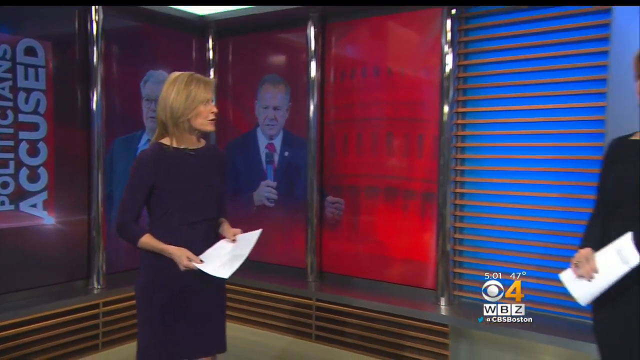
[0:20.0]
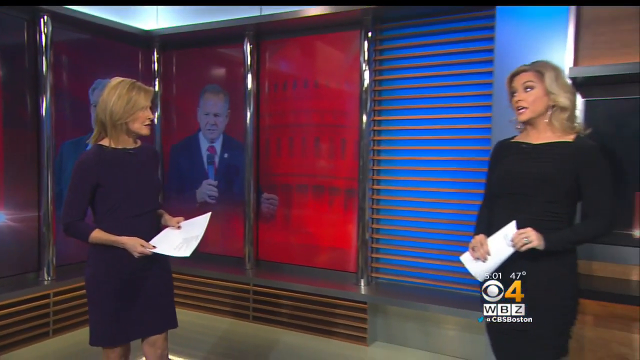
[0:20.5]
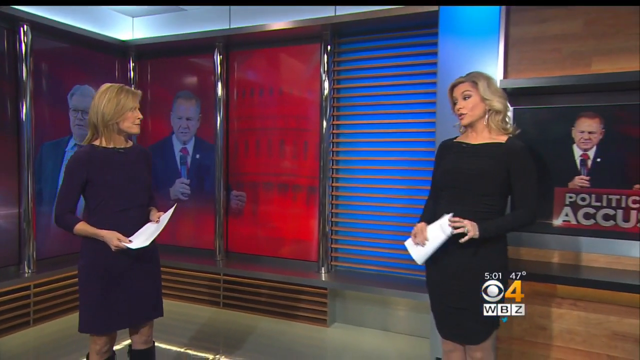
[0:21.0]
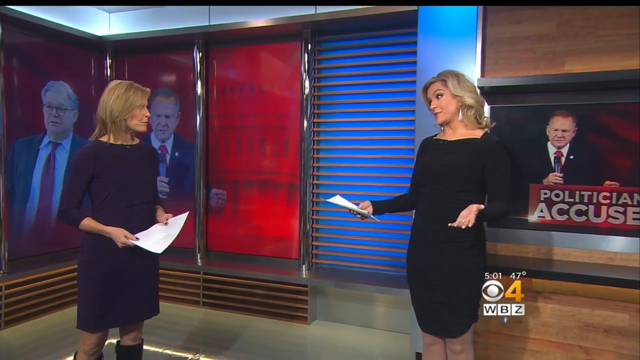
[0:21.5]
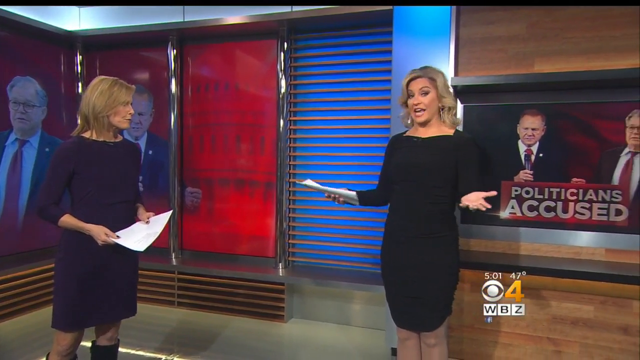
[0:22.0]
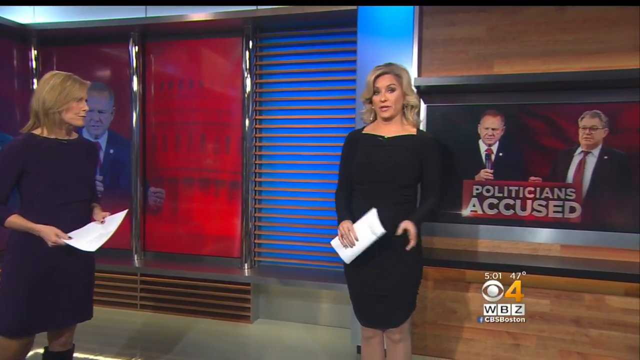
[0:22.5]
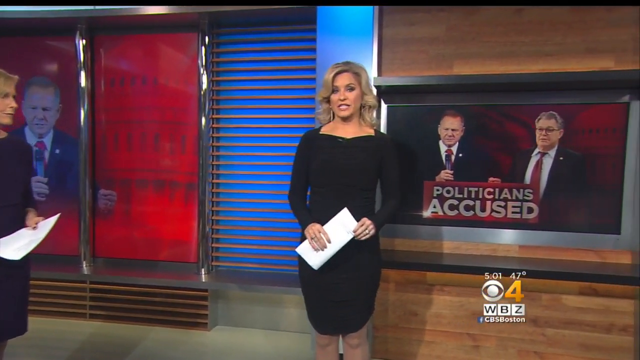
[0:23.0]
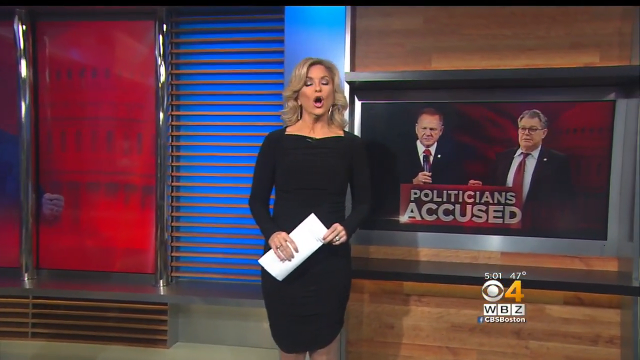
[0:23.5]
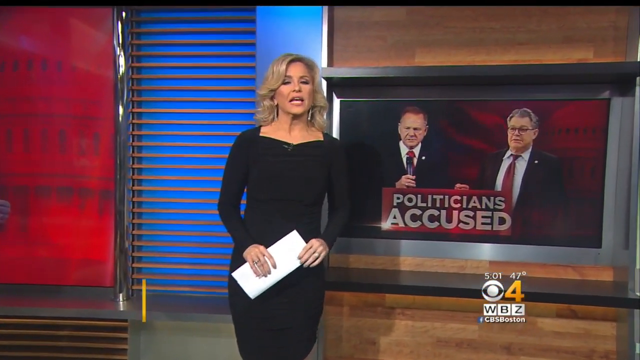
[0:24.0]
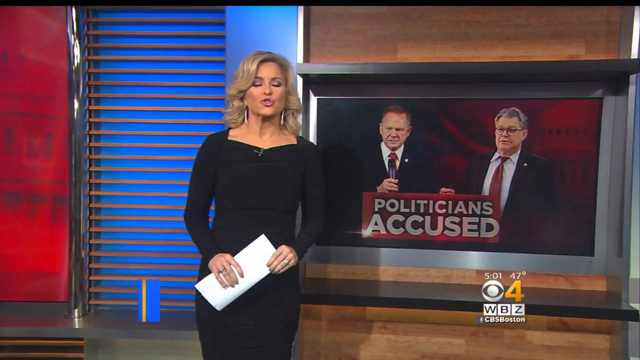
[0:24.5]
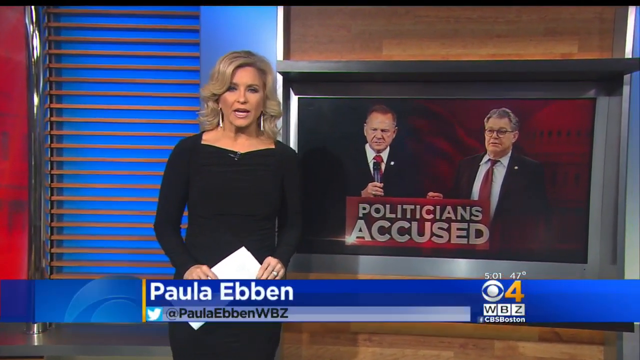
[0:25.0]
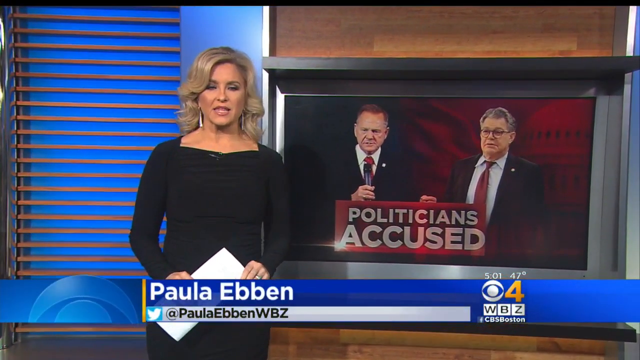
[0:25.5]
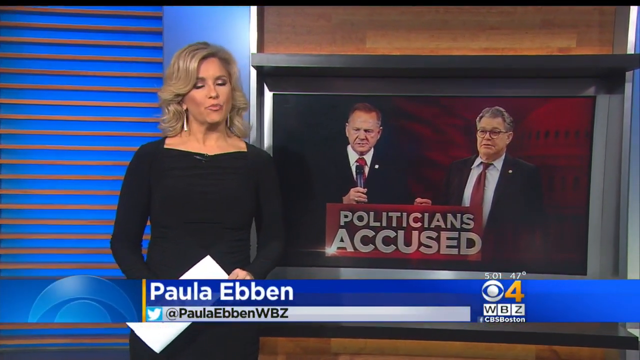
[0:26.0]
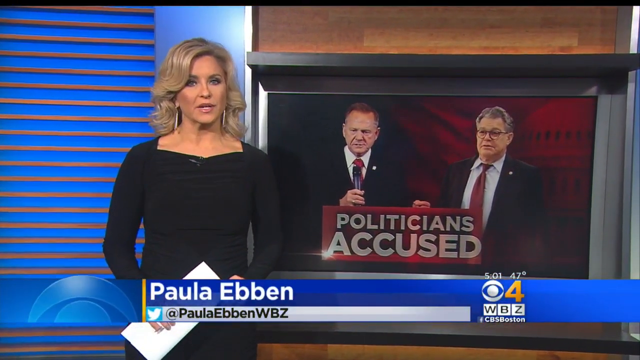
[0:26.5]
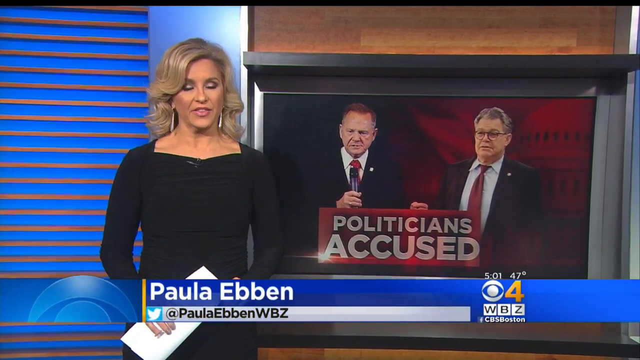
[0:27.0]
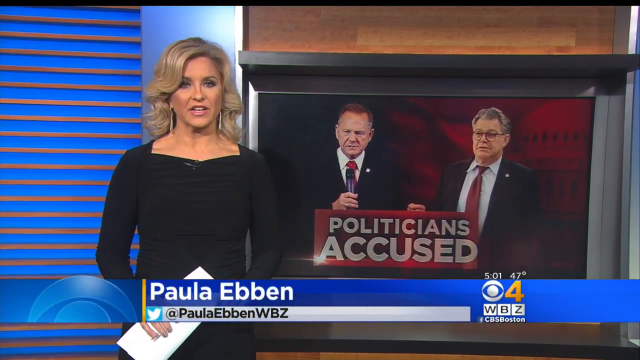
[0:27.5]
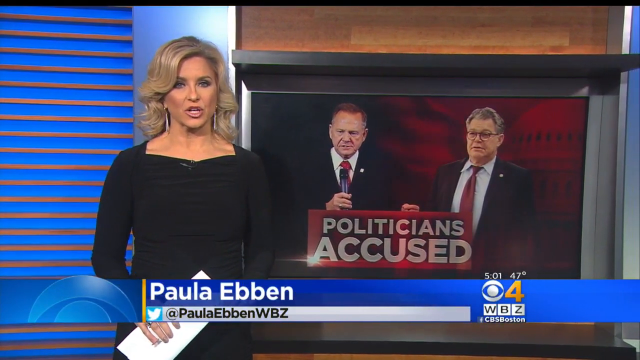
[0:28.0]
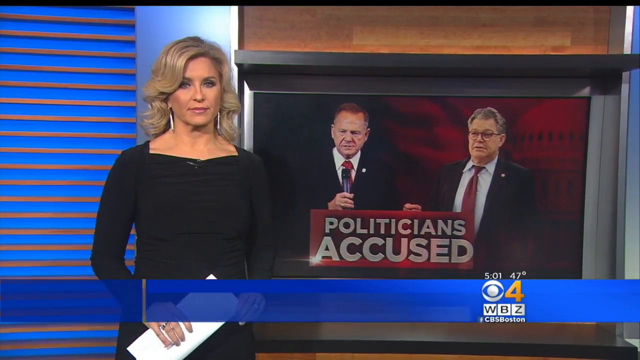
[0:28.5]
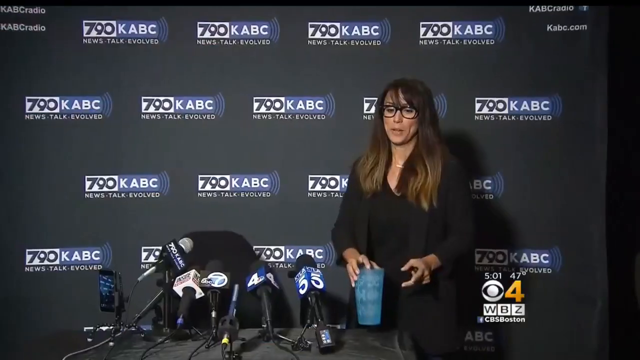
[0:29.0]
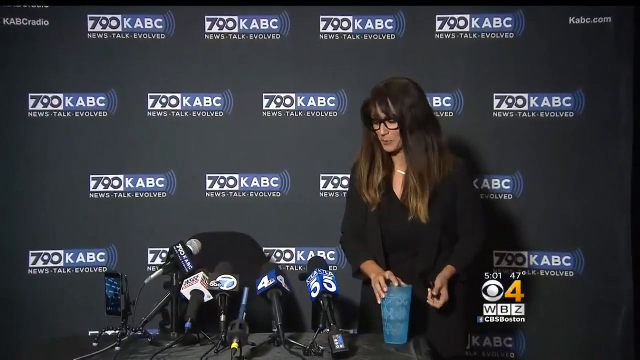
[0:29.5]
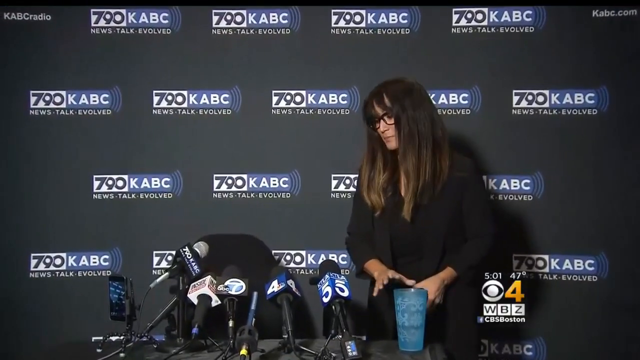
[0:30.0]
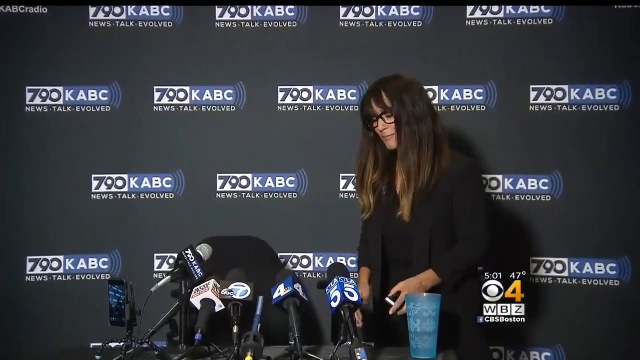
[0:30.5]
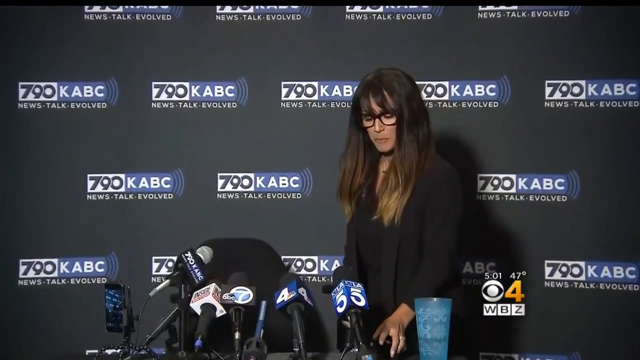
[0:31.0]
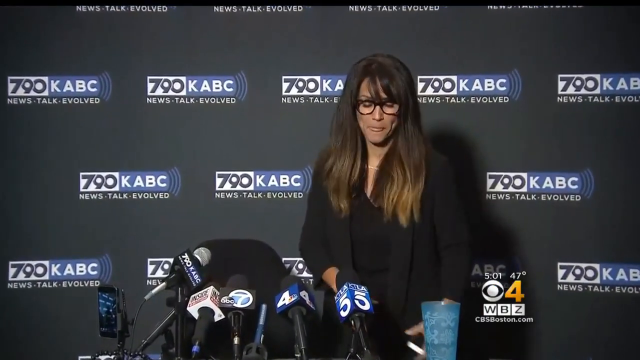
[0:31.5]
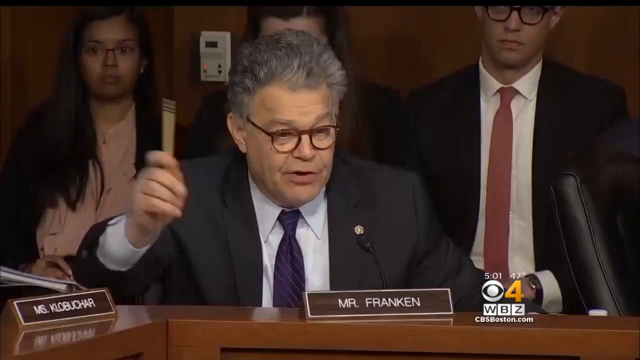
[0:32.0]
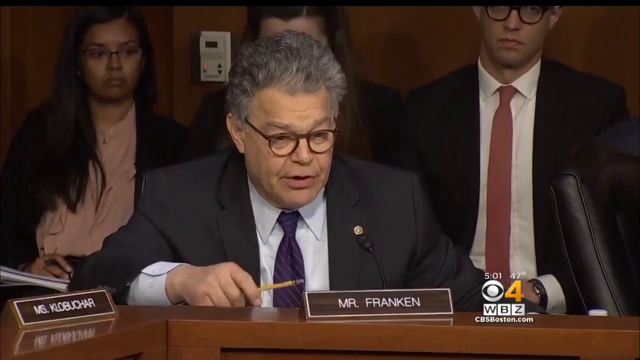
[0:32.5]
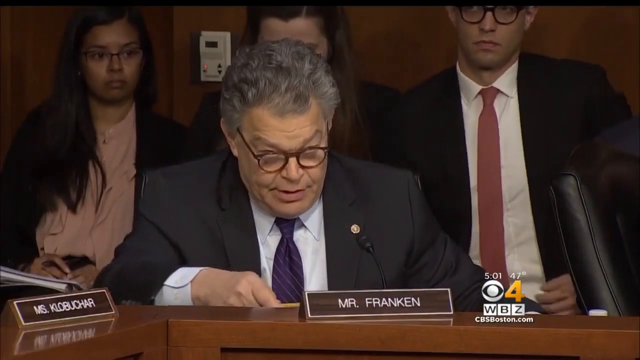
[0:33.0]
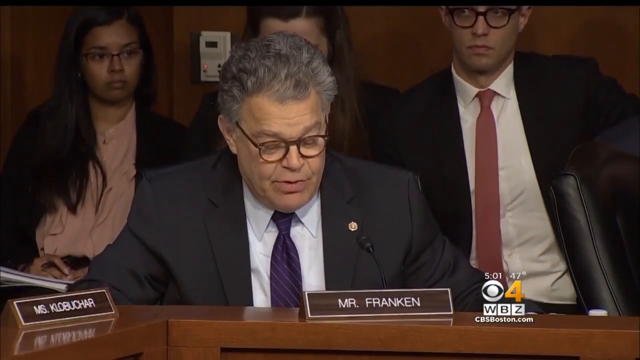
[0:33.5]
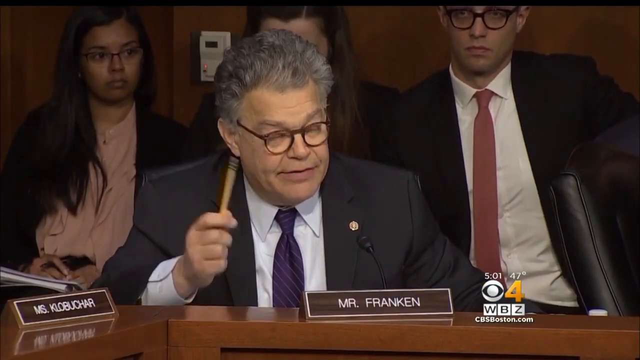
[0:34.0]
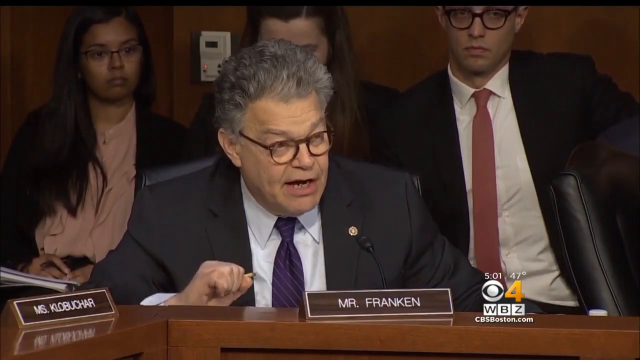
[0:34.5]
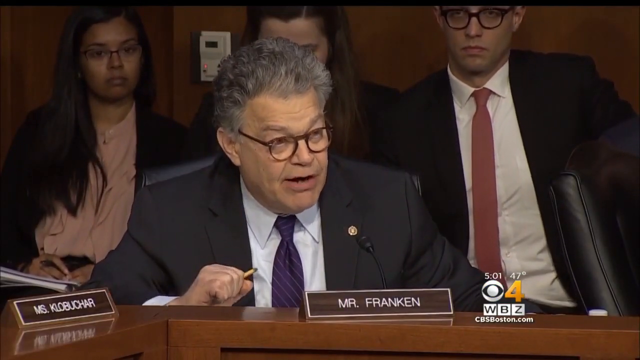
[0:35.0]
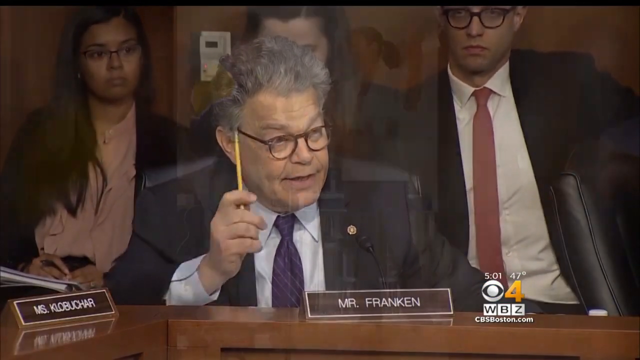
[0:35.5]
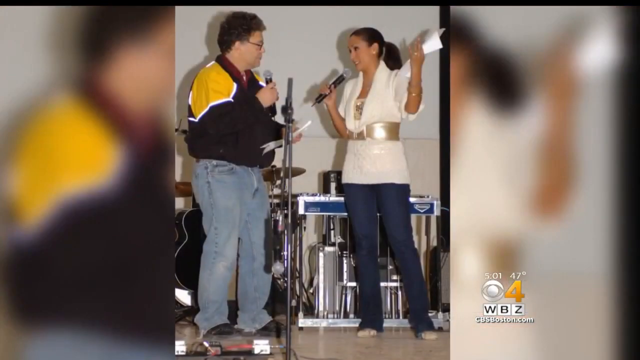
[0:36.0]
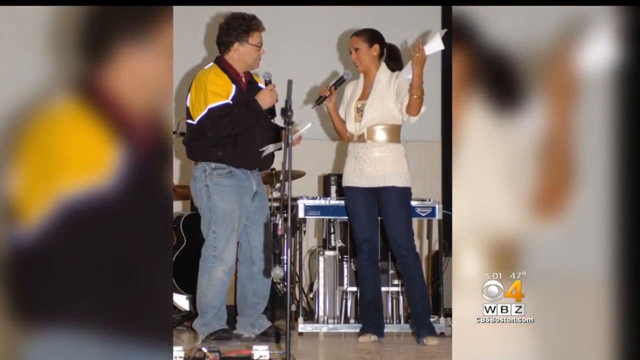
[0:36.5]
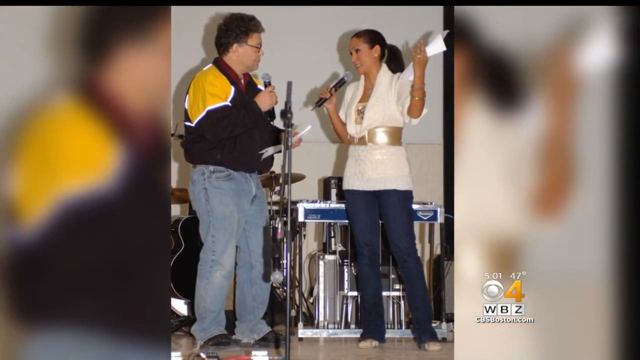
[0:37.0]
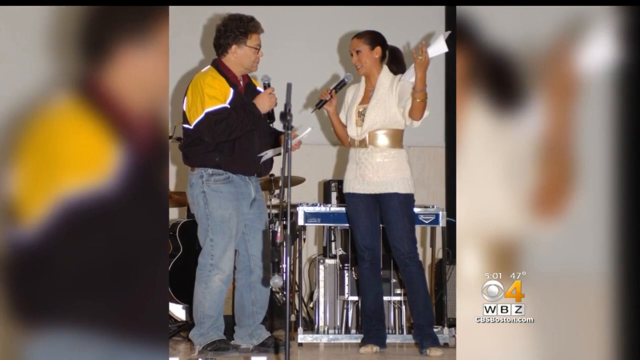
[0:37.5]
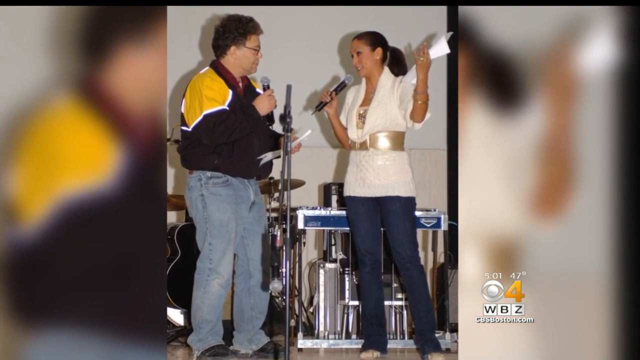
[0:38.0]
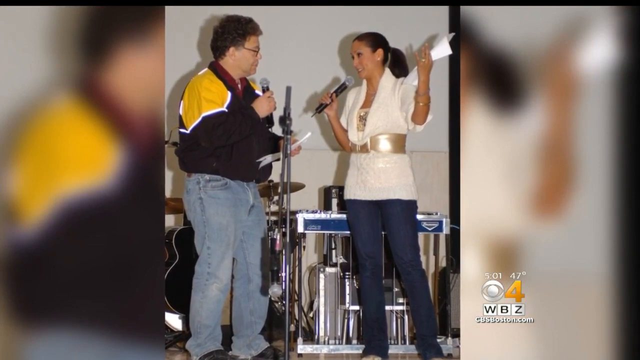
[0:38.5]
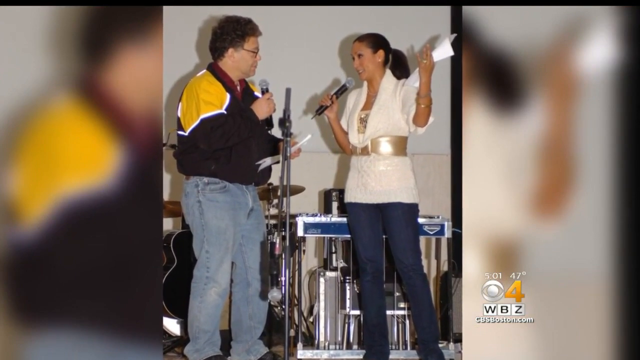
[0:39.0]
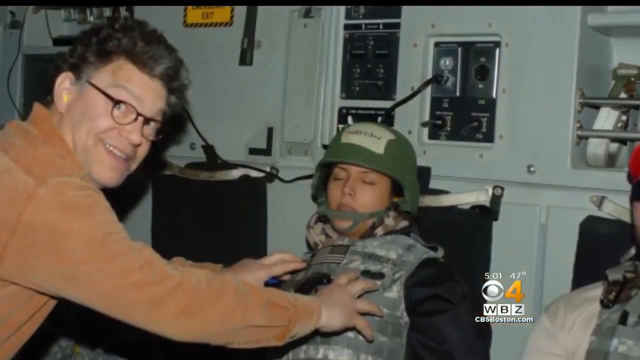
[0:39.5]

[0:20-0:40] The blonde woman in the purple dress continues speaking, with Al Franken and Roy Moore on a red background behind her. The camera moves to the right and a younger TV reporter appears, and the shot zooms in on her alone. She is white with blonde hair and wears a black dress; a blue banner gives her name as Paula Ebben. Behind her is a screen with pictures of the two politicians and "politicians accused". The video cuts to a press conference on 790 KABC, showing a white woman in a black outfit close to a seat with microphones. It then cuts to a video of Al Franken in a suit speaking towards the microphone at a desk, with three people behind him. Another picture shows him apparently singing on stage with a woman; both hold microphones, and guitars and keyboards are visible in the background.